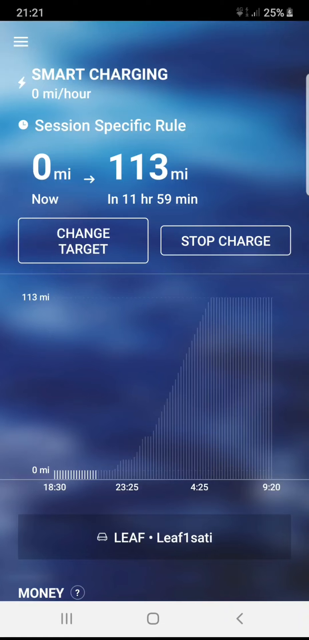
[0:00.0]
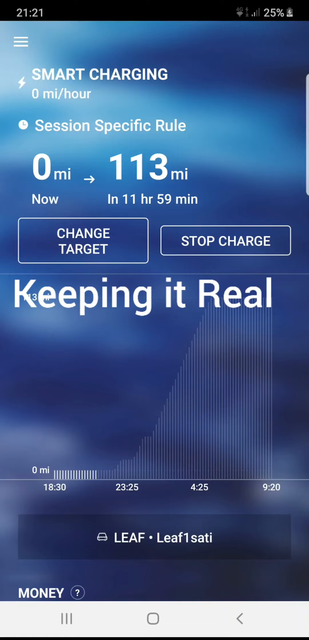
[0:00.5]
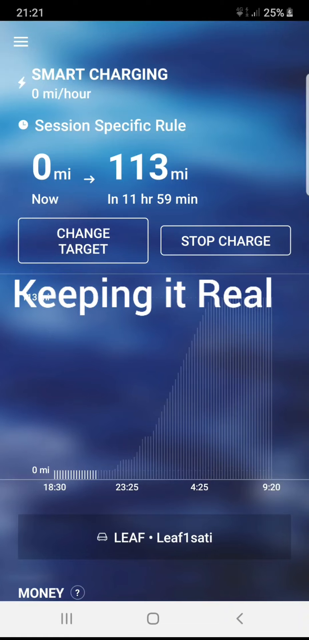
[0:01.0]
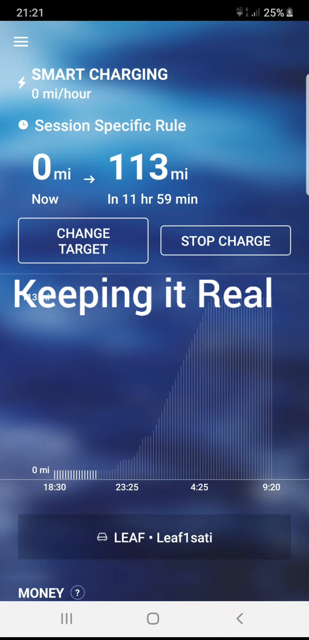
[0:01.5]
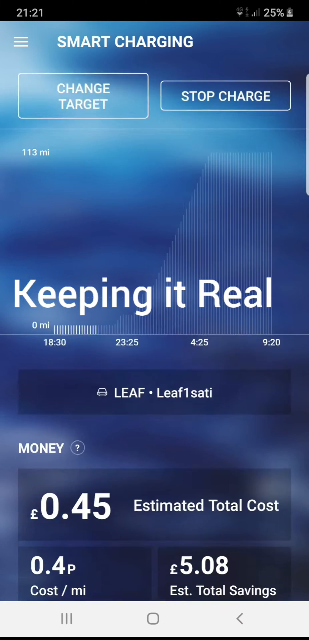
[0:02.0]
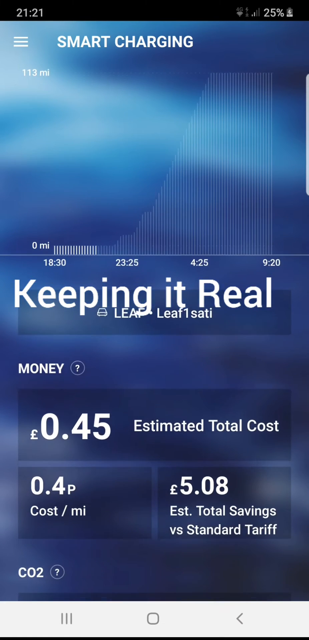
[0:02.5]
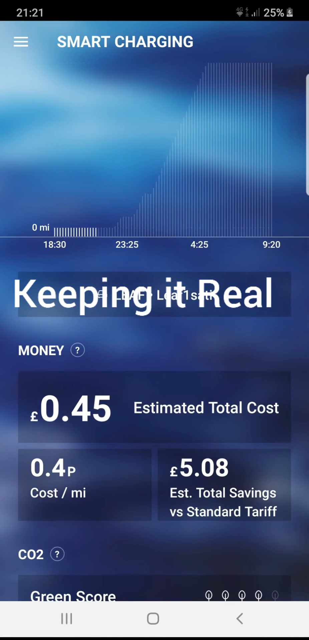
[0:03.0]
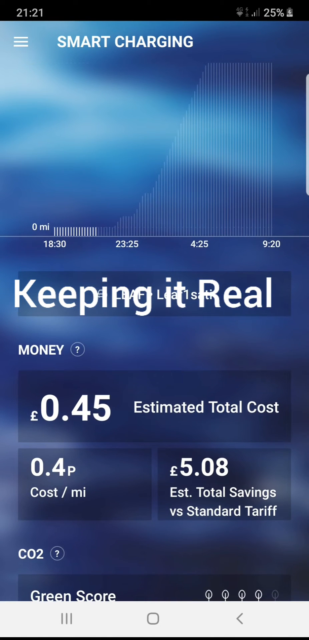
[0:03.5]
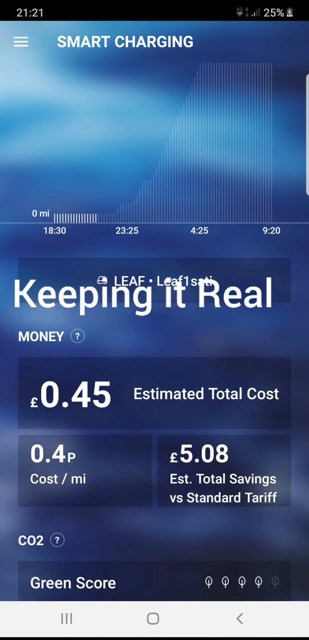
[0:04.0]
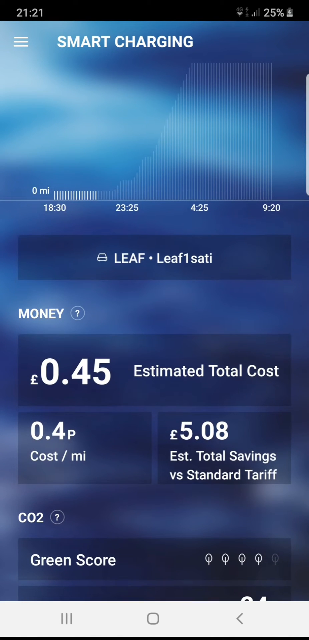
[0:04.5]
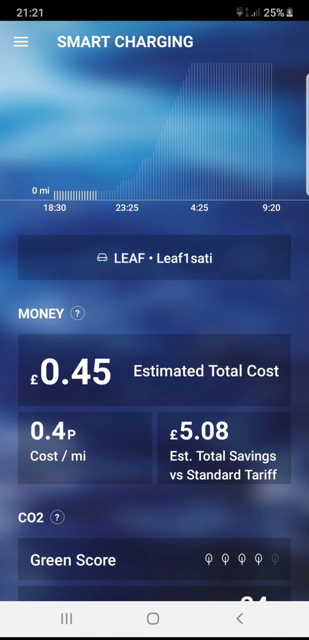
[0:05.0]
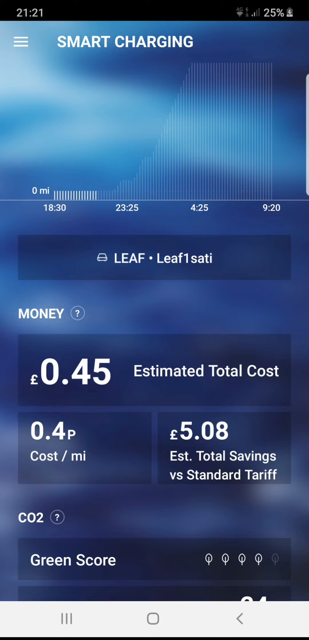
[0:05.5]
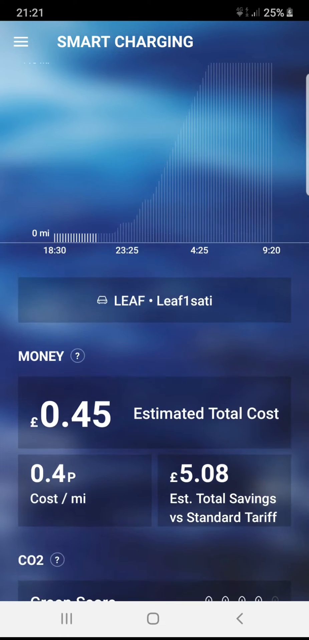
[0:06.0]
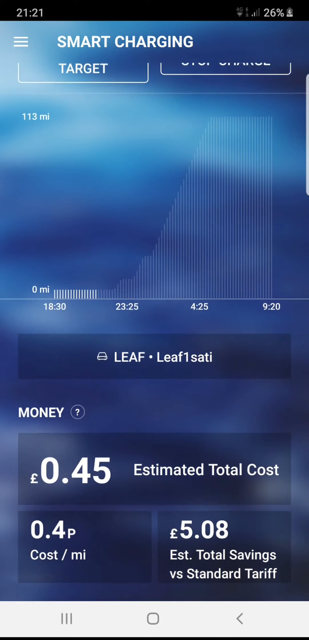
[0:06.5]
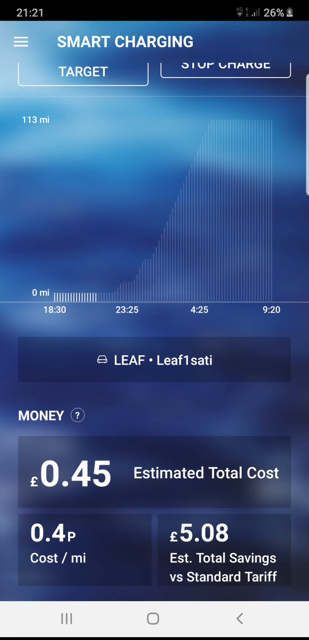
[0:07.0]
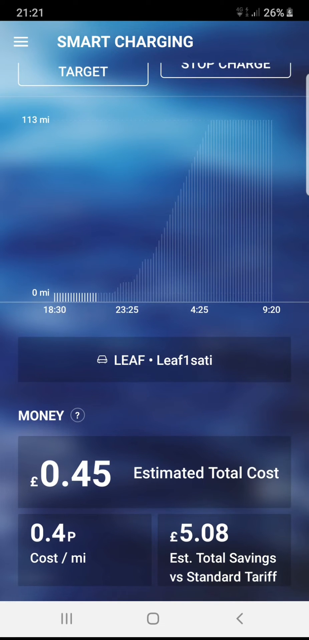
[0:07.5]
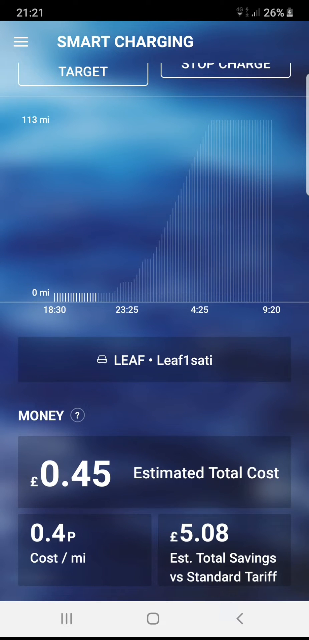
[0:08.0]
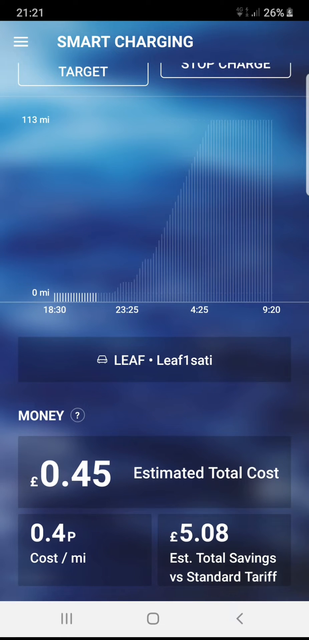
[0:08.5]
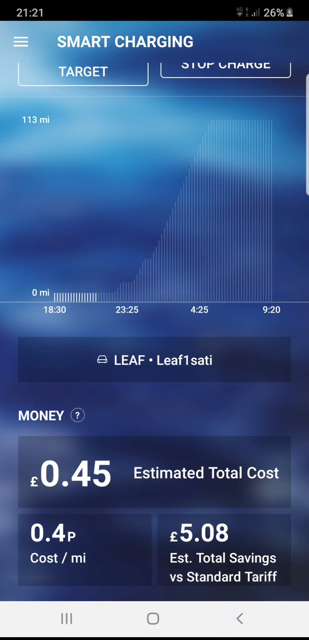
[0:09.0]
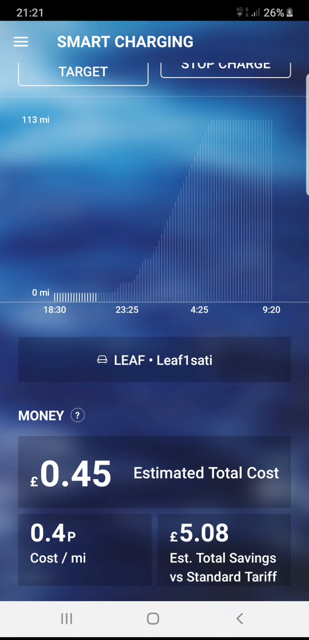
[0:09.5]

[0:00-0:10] A blue mobile phone screen shows the status of smart charging, including a number of miles and a number of hours, with options to change the target and to stop the charge at any point. The bottom half of the screen holds a chart whose y-axis shows the hours, with a bar for every hour showing the miles. As the screen is scrolled down, the estimated charge appears, given in British pounds, along with the cost per mile and the estimated total savings versus the tariff. A status for carbon emissions, the green score, is also shown. The design is simple, clean and modern.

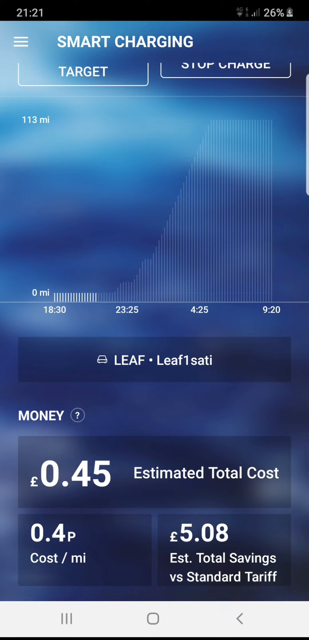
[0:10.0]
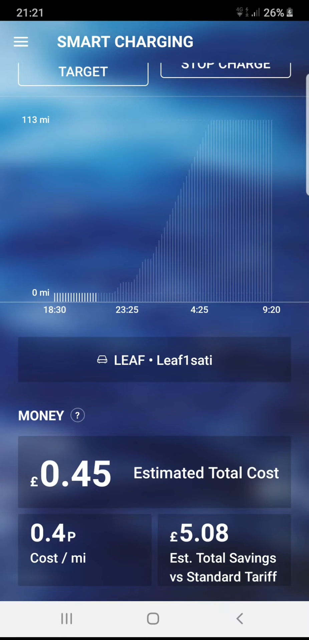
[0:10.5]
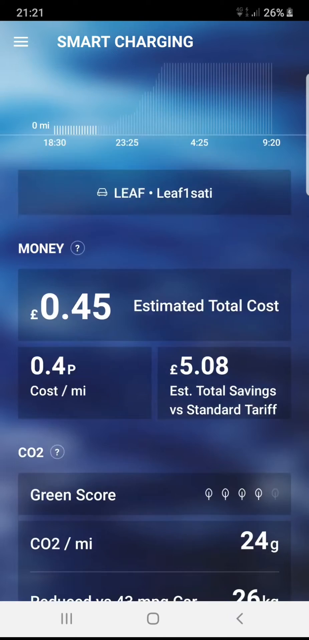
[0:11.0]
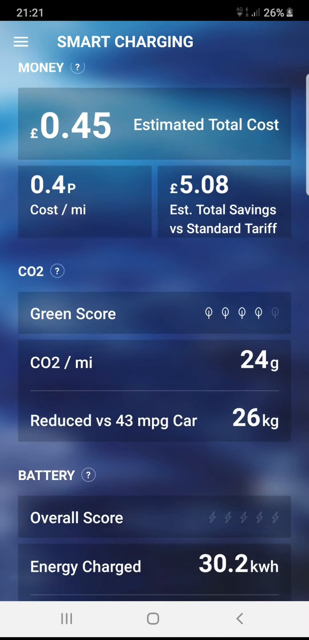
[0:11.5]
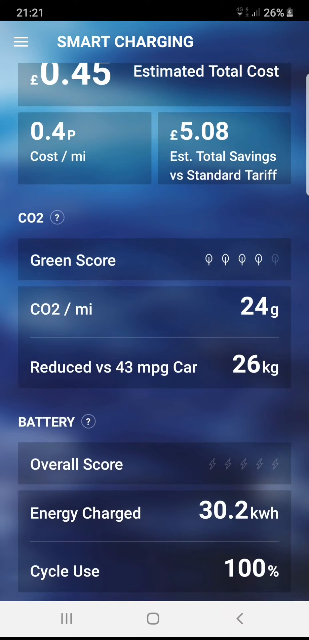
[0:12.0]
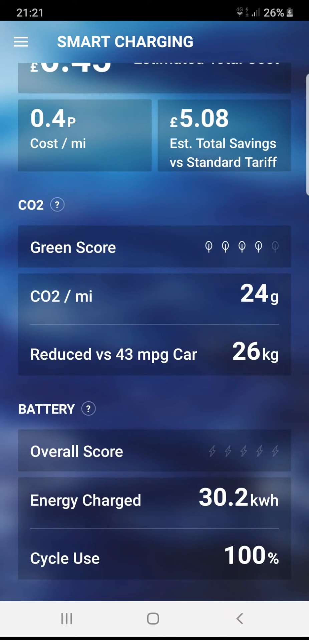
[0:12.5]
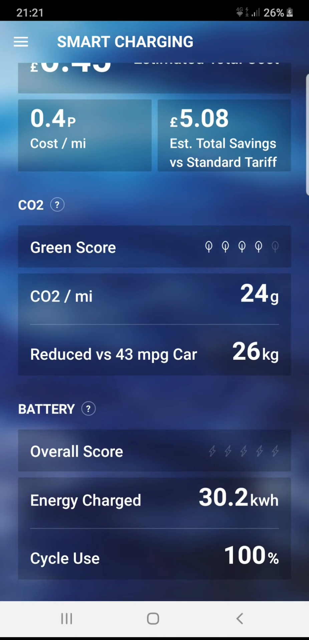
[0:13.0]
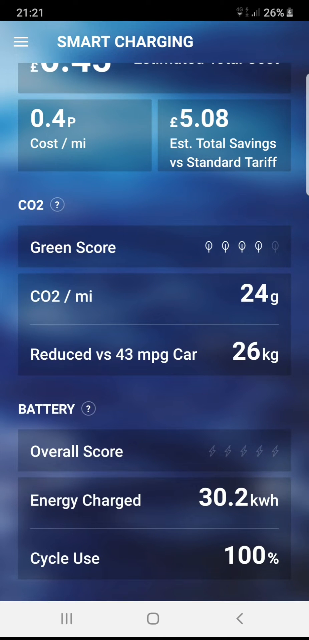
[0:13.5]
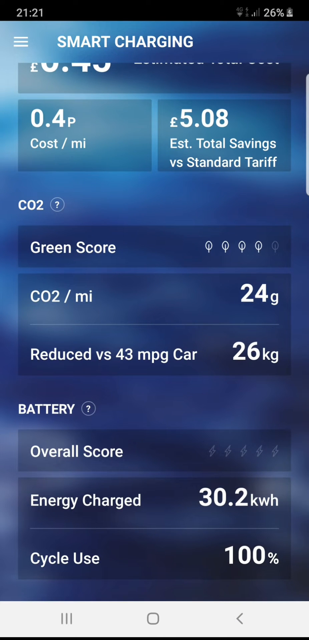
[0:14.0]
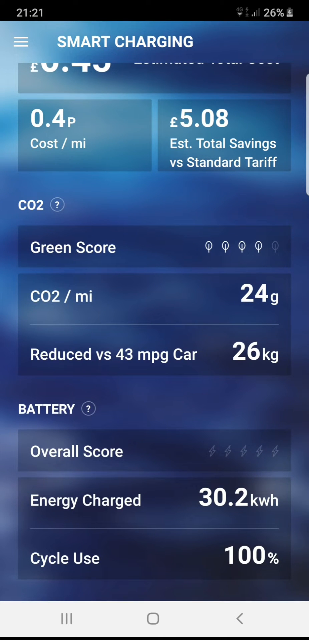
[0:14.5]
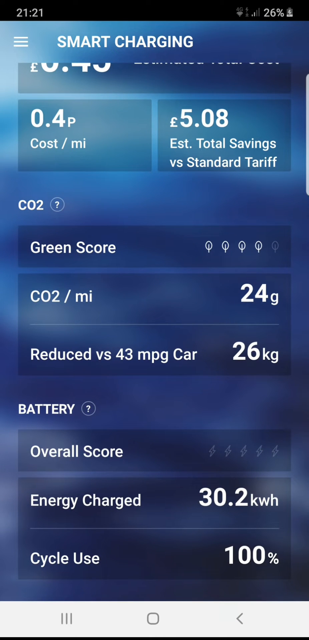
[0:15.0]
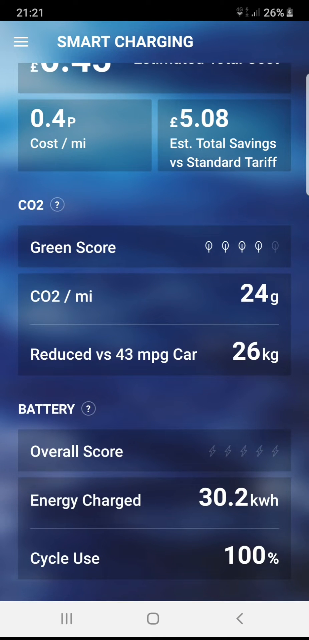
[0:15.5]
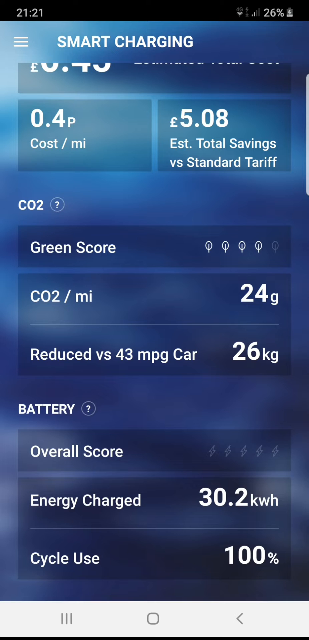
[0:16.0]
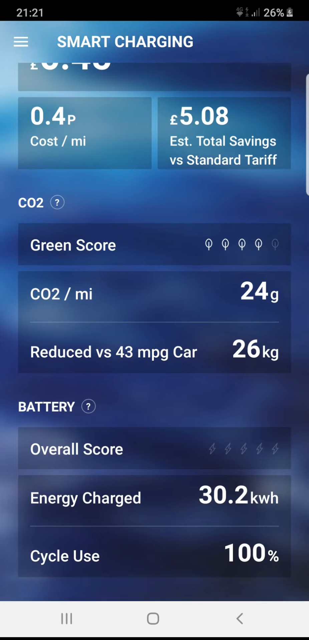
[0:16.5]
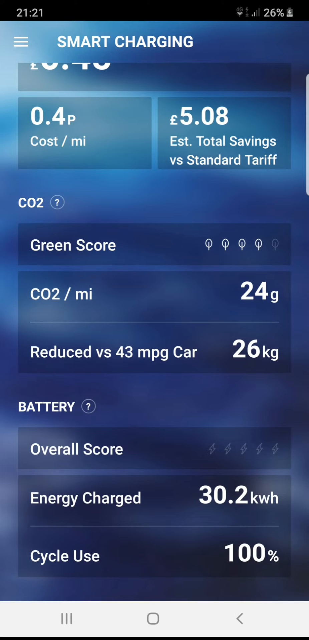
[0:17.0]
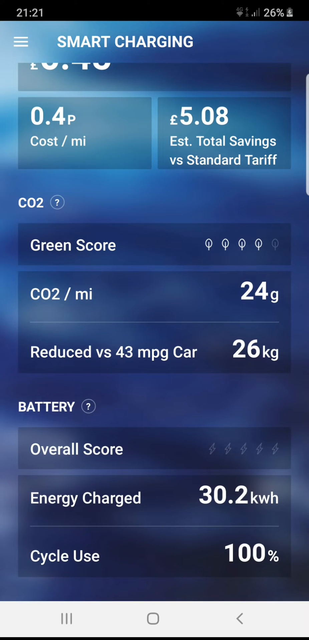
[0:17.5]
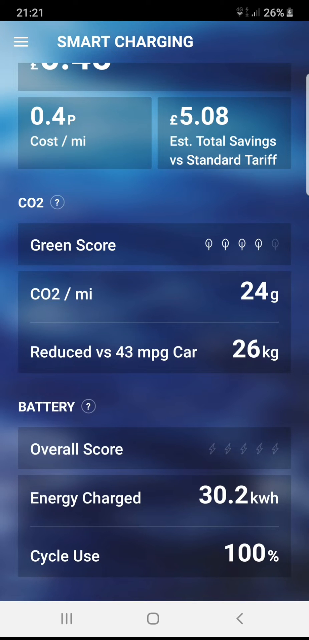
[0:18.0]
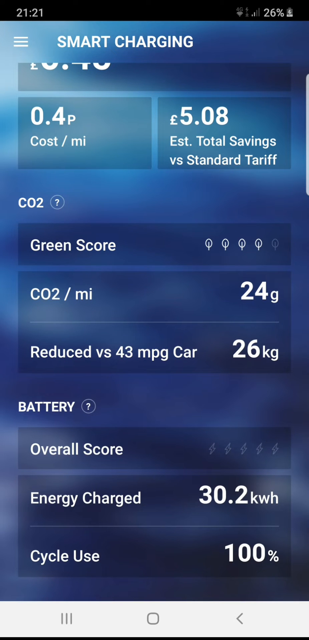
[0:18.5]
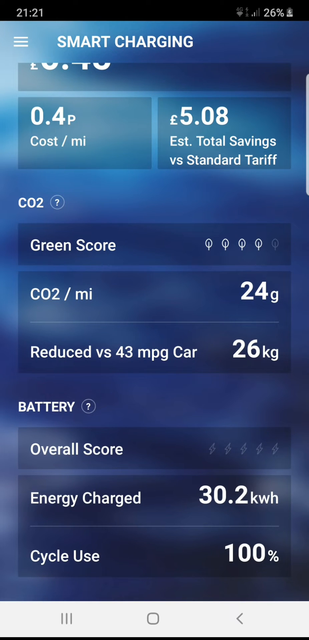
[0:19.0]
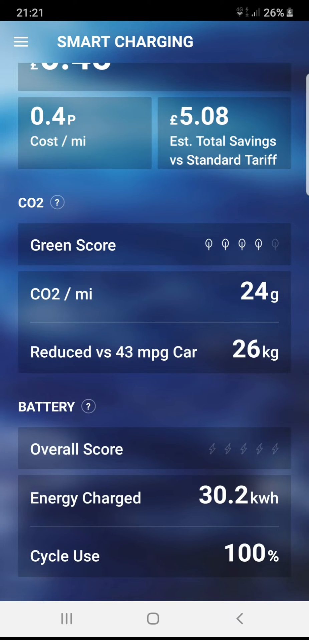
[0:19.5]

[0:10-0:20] Scrolling further down reveals more status updates: the green score and then the battery. The battery section shows how much was charged and the percentage of the cycle used. The green score section has some logos, five different objects, four of which are lit up. It also lists grams of carbon per mile and a reduction versus a 43 miles per gallon car, possibly as a comparison. Below the time of charge is a dark blue rectangle with "LEF1SATI" listed below it, apparently the name of the vehicle.